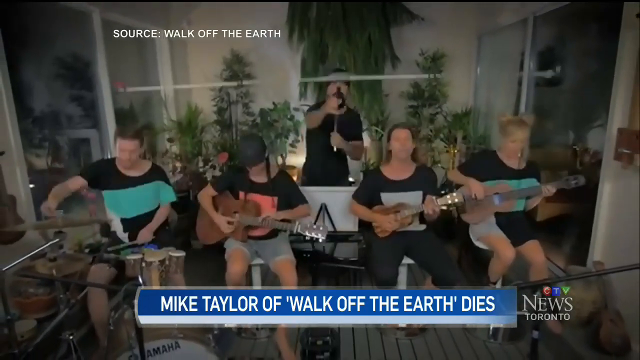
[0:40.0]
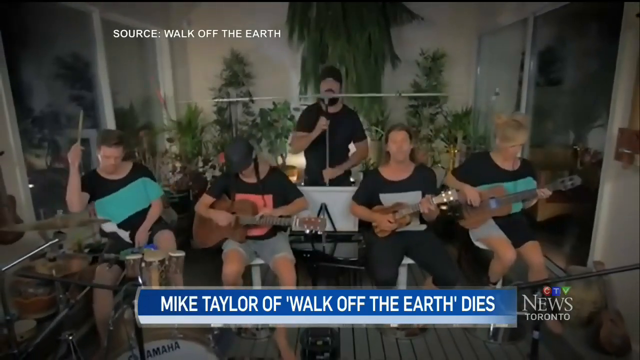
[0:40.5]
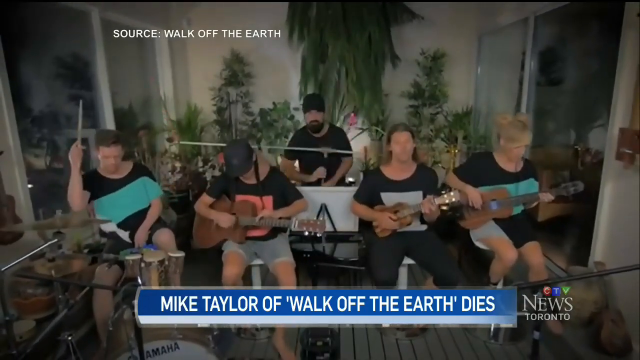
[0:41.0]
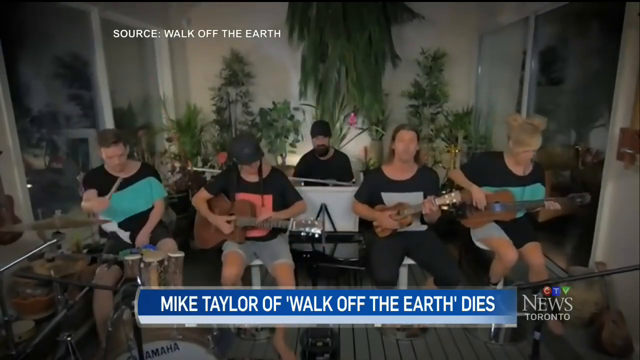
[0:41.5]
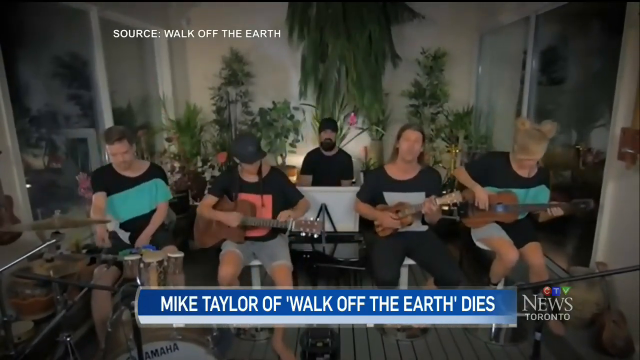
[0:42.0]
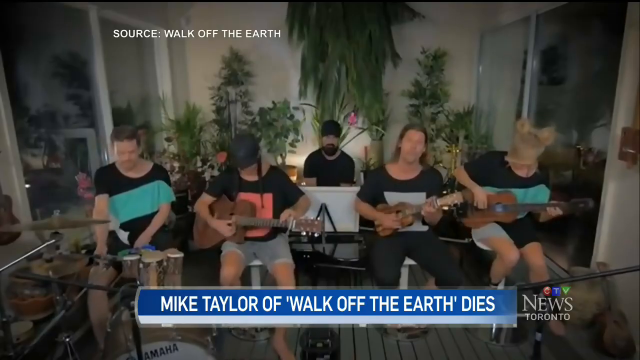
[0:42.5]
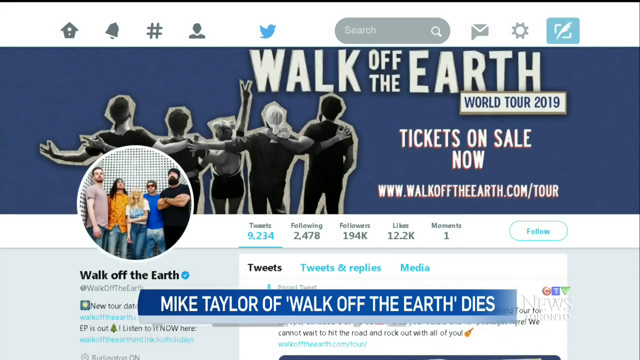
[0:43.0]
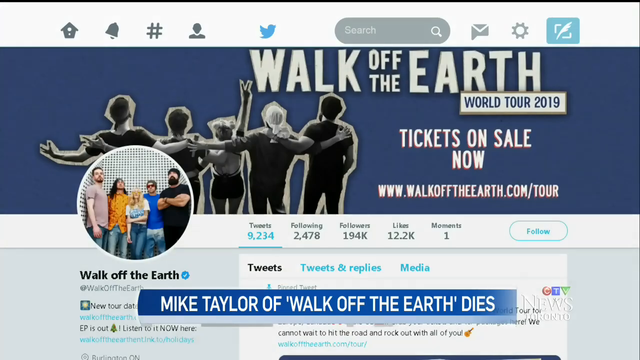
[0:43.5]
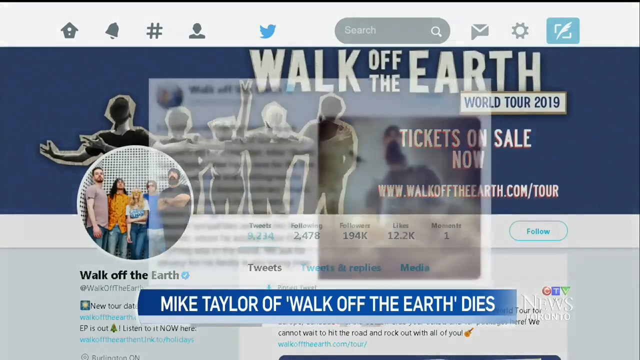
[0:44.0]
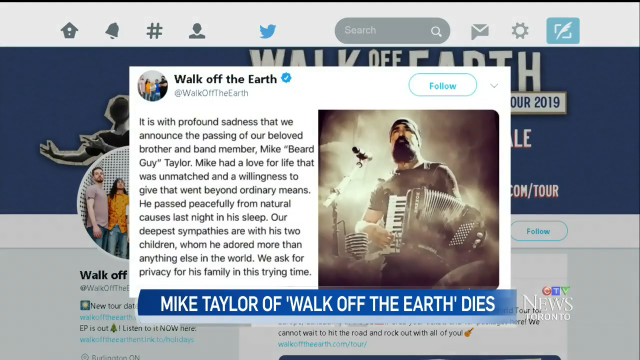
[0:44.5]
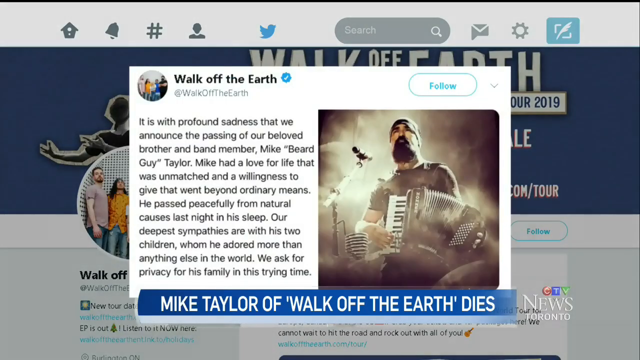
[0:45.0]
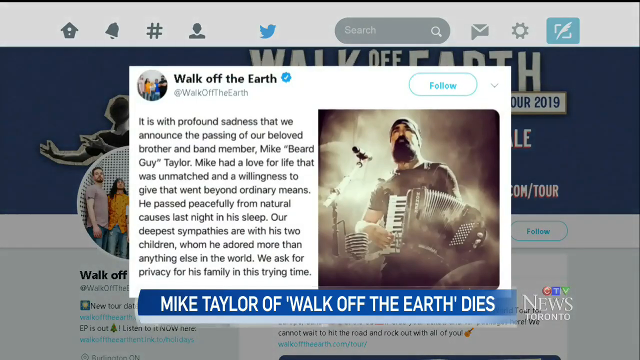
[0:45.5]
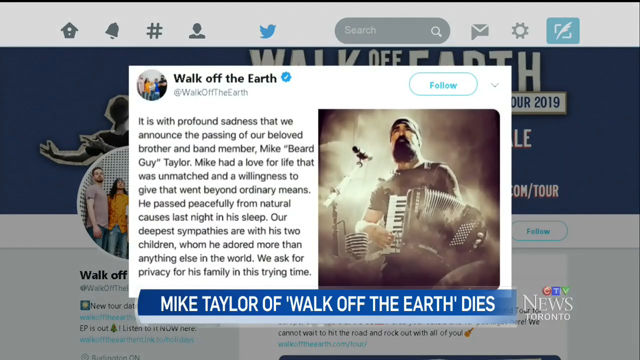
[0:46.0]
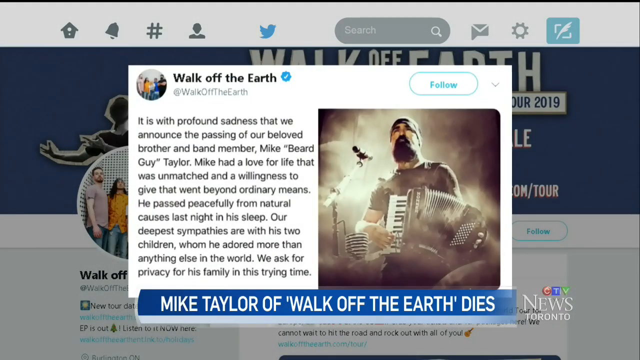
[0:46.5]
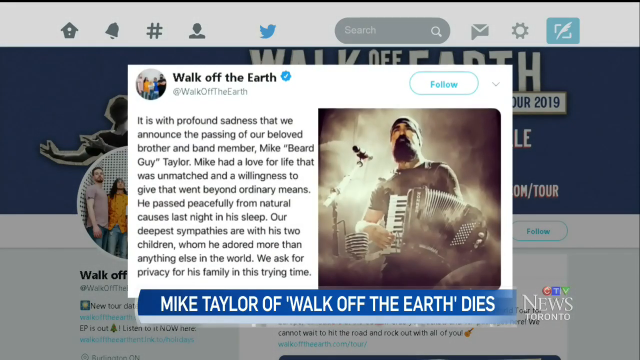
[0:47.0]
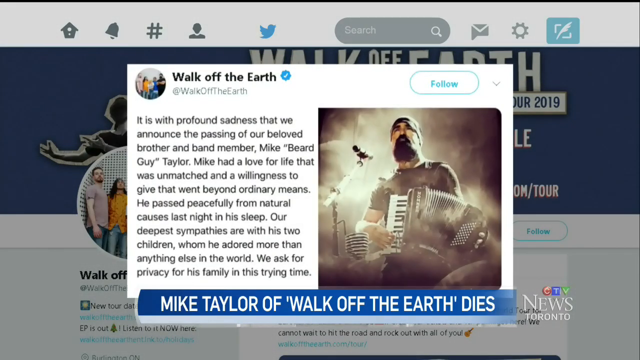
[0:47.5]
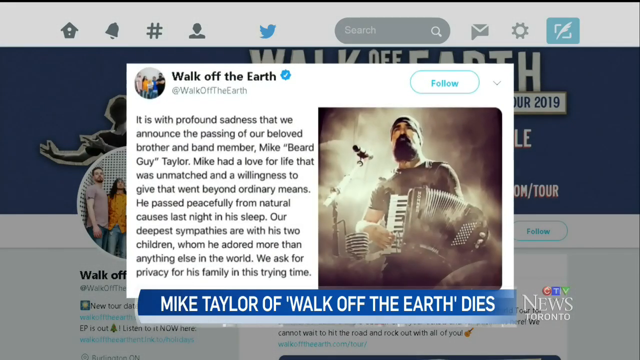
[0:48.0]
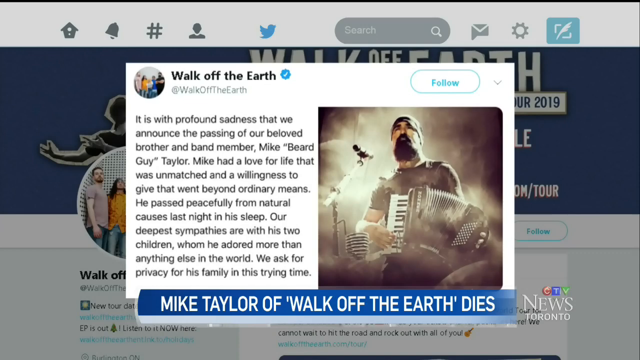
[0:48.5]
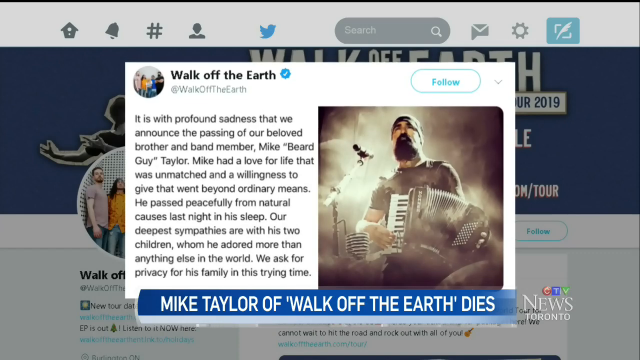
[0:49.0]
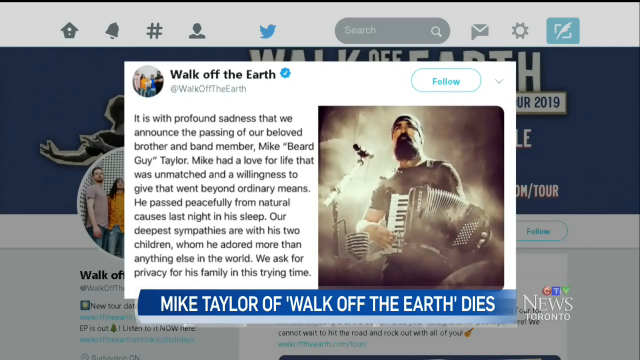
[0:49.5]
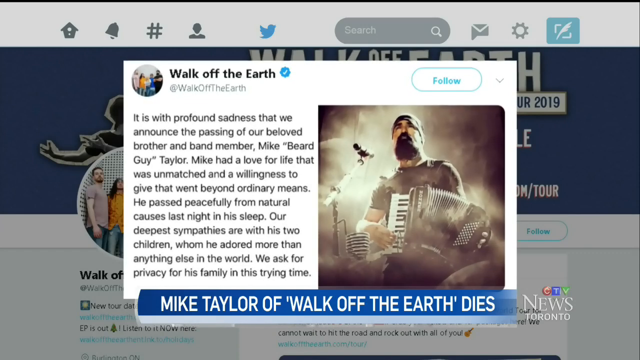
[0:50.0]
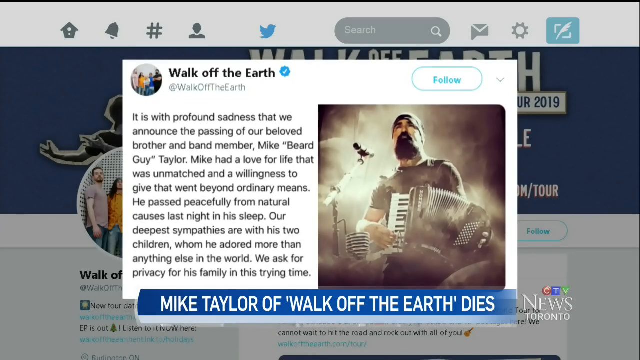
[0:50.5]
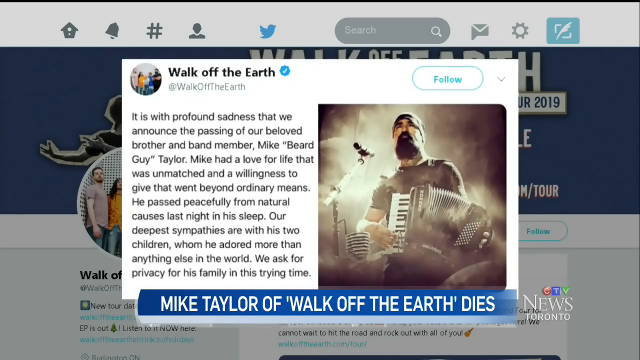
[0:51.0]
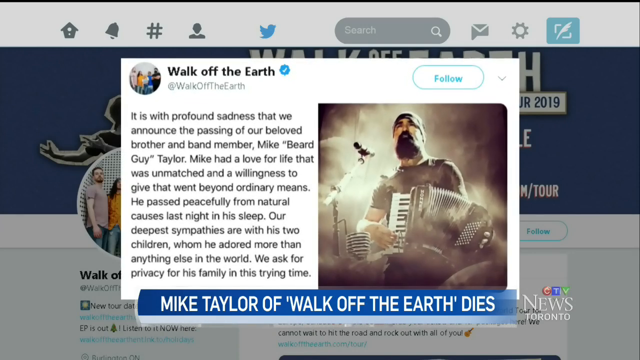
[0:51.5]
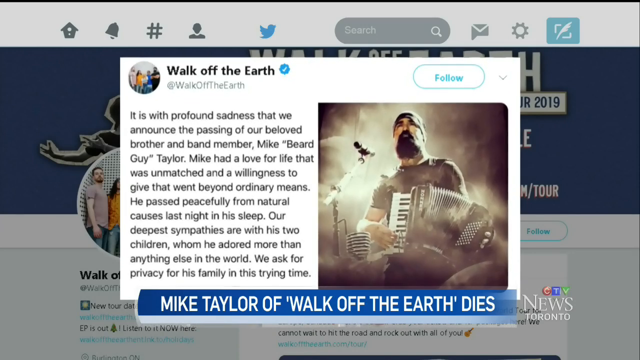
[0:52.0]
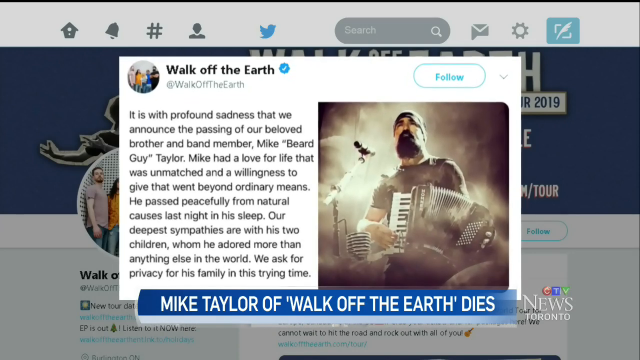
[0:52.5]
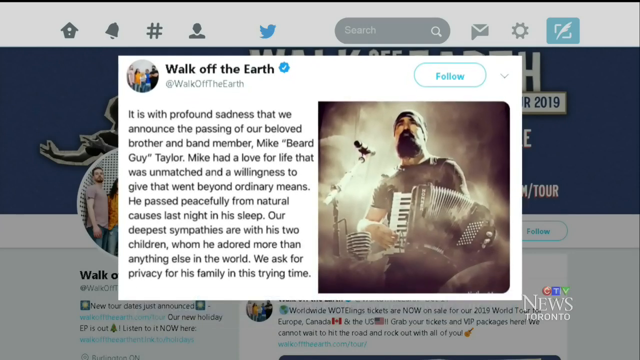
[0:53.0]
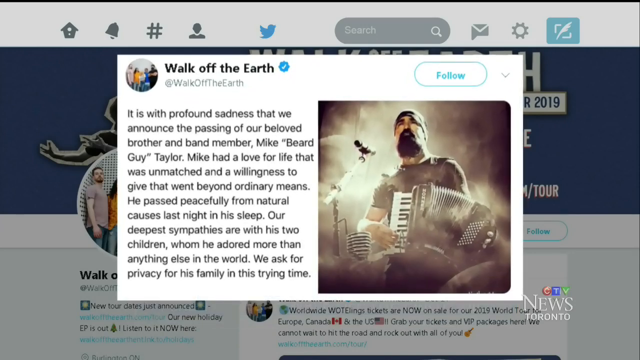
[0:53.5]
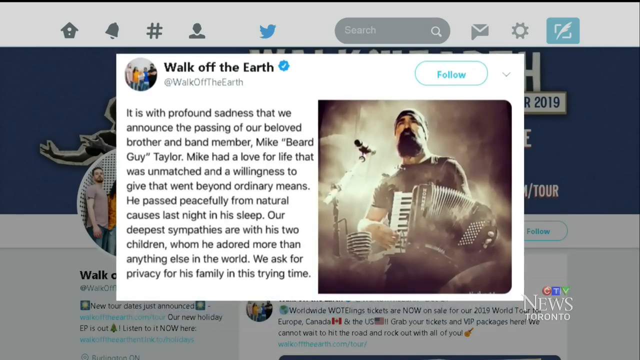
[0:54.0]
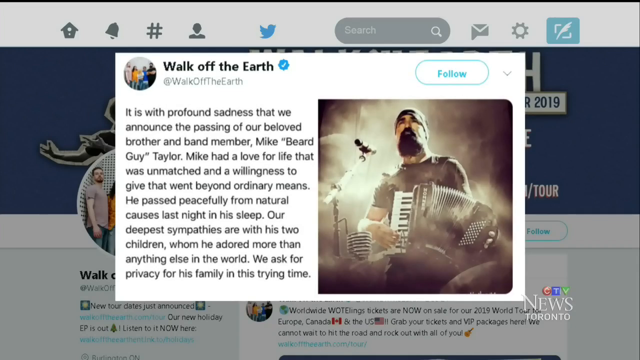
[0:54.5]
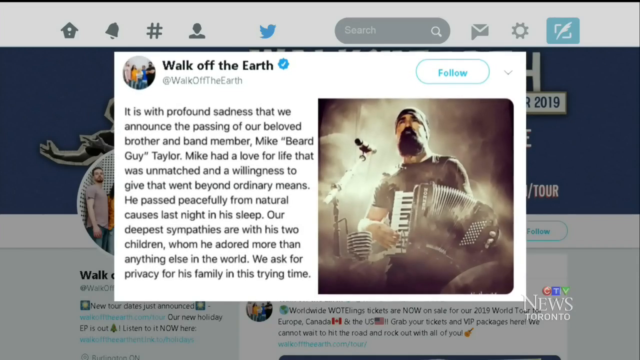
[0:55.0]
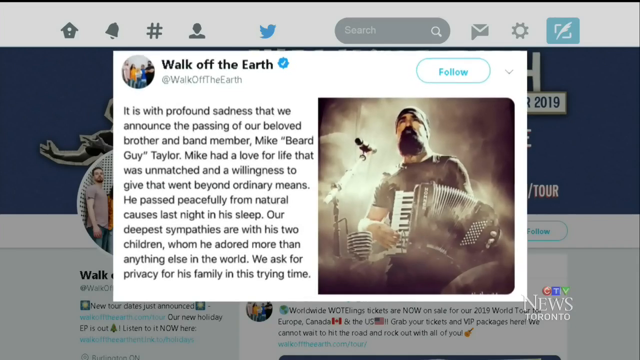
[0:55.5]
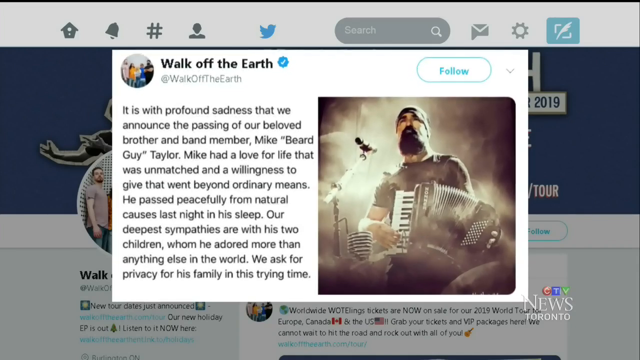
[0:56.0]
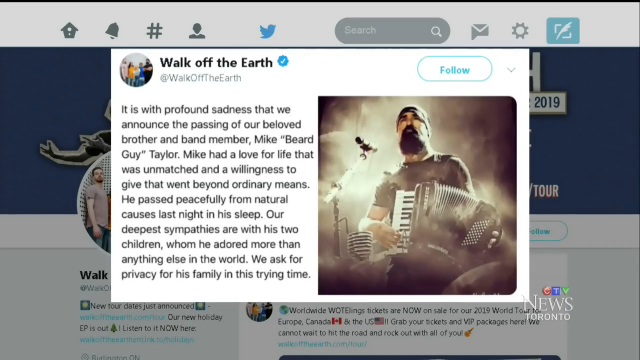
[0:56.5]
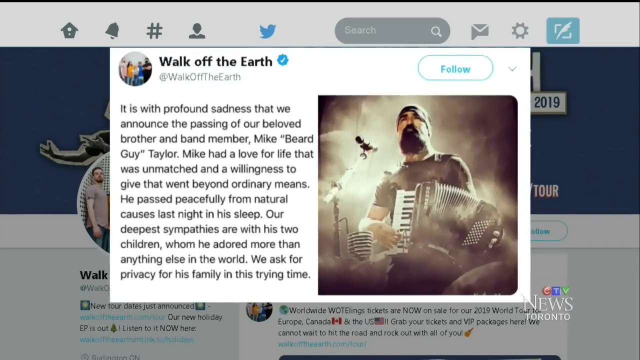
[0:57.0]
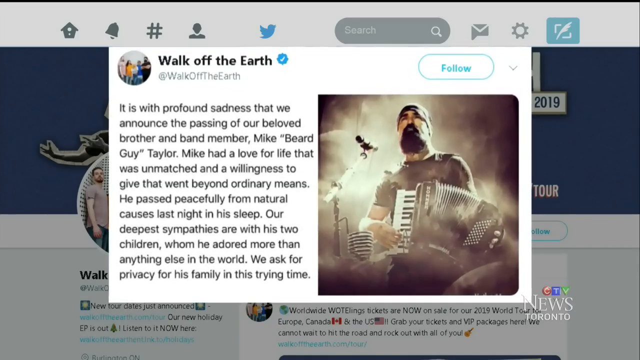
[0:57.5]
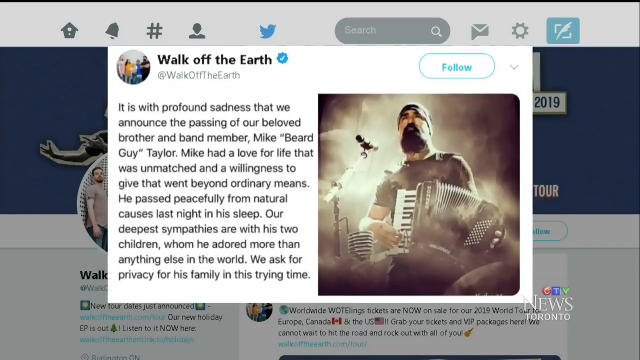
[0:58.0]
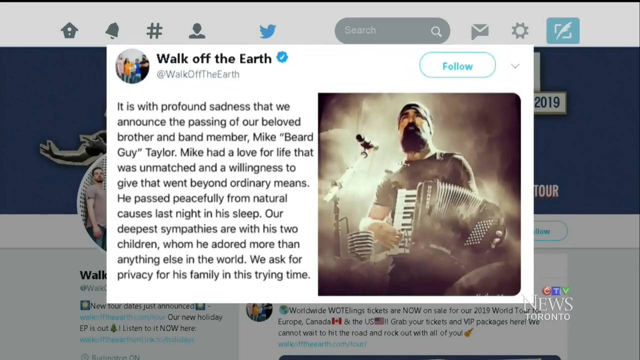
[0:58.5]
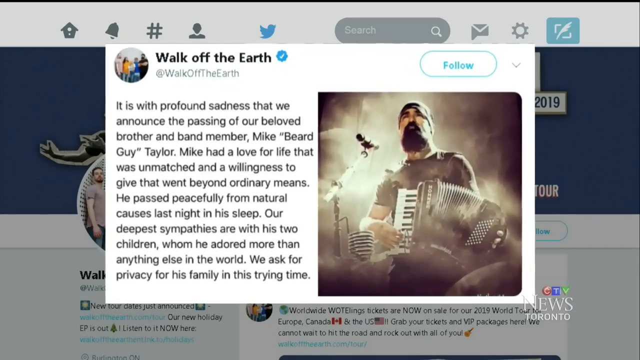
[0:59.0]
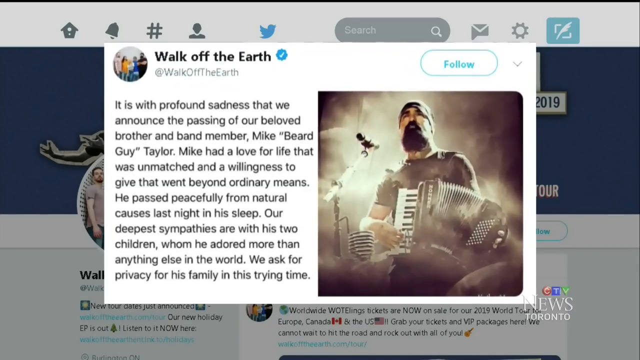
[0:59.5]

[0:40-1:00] The caption "MIKE TAYLOR OF 'WALK OFF THE EARTH' DIES" is at the bottom of the screen alongside the CTV News Toronto logo. The video transitions to a web page that appears to be the World Tour 2019 page of the group Walk Off the Earth. Across the center top of the screen, "WALK OFF THE EARTH" appears in capitalized white text in an unusual layout on a blue-gray header background, with the words "Off The" stacked vertically. Below it, sub text reads "TICKETS ON SALE NOW www.walkofftheearth.com/tour". An overlay with a white background appears in the center of the screen over the web page, headed "Walk Off the Earth". On the right side of this overlay is a cloudy, mystical-feeling black-and-white photo of a bearded man in a black short-sleeved crew neck T-shirt and a fairly snug-fitting black pullover cap, playing an accordion. The text reads: "It is with profound sadness that we announce the passing of our beloved brother and band member, Mike \"Beard Guy\" Taylor. Mike had a love for life that was unmatched, and a willingness to give that went beyond ordinary means. He passed peacefully from natural causes last night in his sleep. Our deepest sympathies are with his two children, whom he adored more than anything else in the world. We ask for privacy for his family in this trying time." The overlay stays stationary while the camera slowly zooms in toward the photo of Mike holding the accordion, to the right of the text.